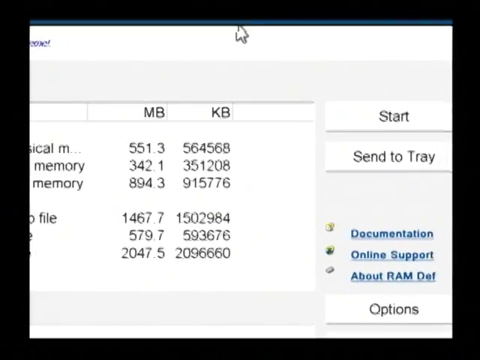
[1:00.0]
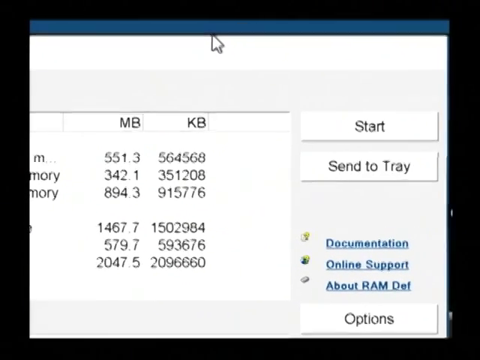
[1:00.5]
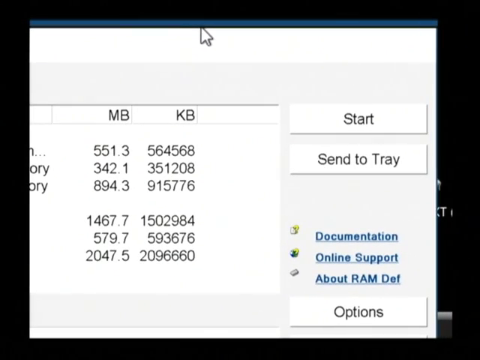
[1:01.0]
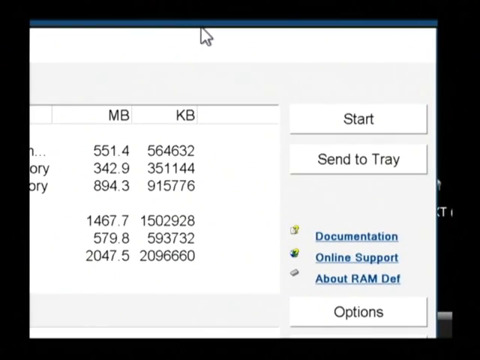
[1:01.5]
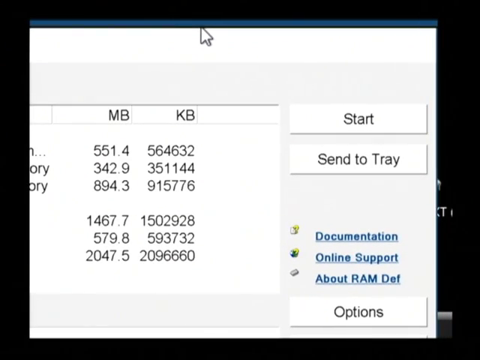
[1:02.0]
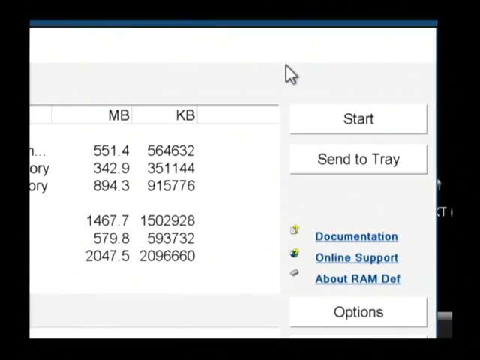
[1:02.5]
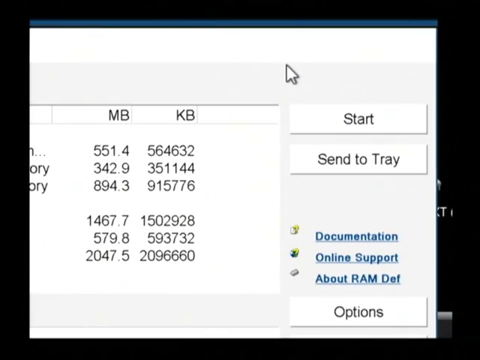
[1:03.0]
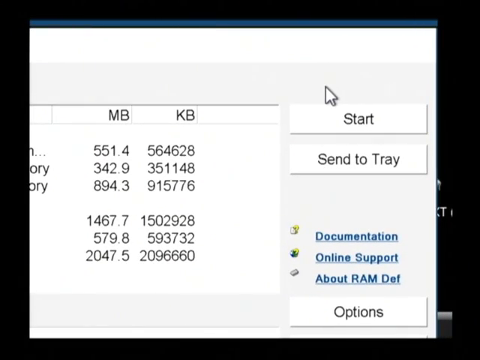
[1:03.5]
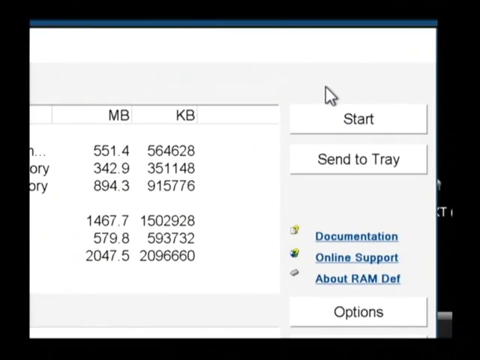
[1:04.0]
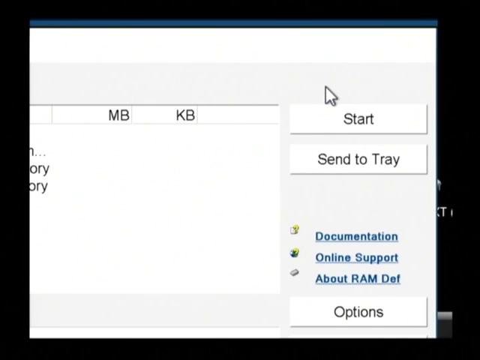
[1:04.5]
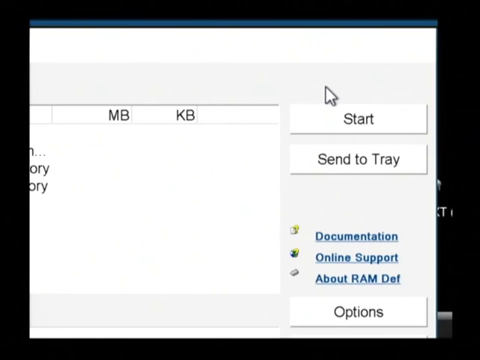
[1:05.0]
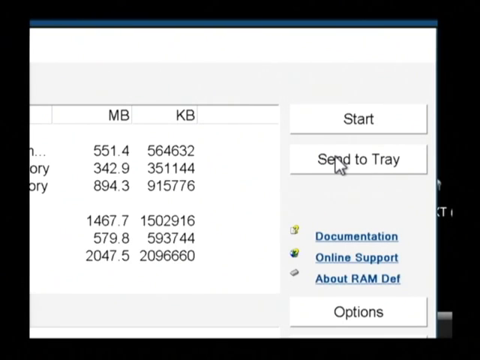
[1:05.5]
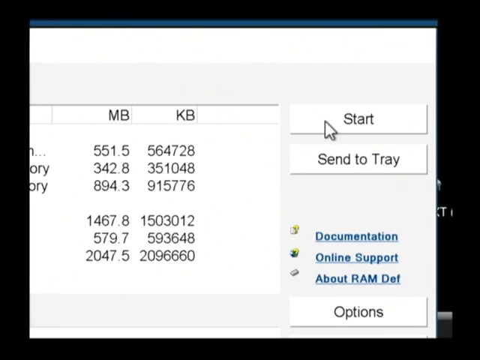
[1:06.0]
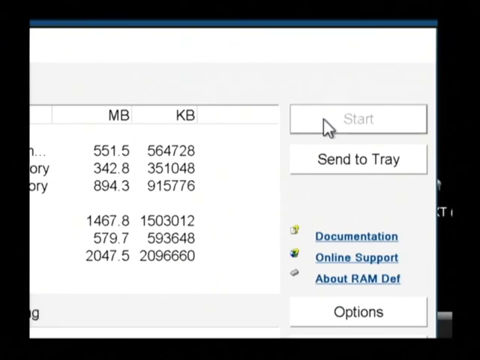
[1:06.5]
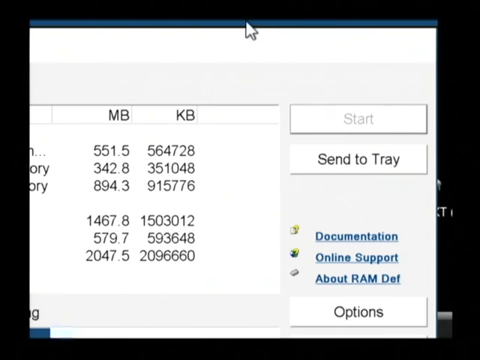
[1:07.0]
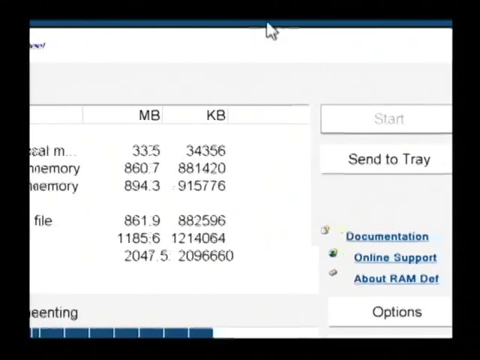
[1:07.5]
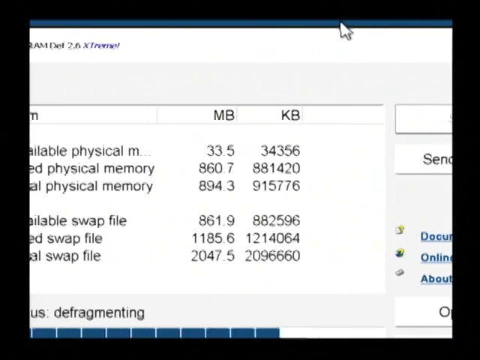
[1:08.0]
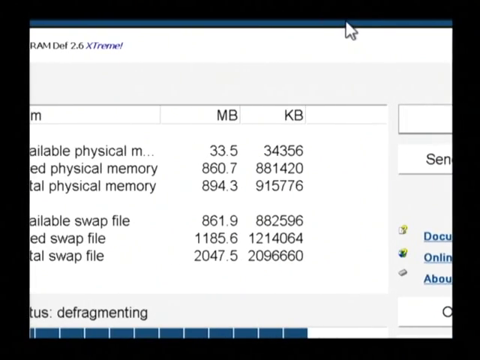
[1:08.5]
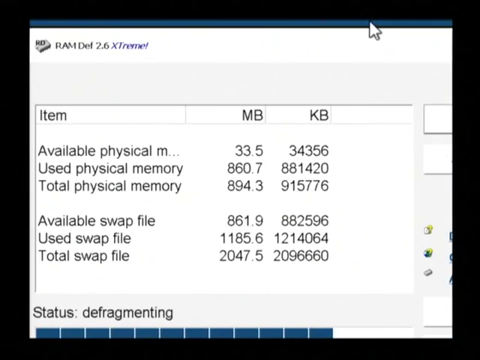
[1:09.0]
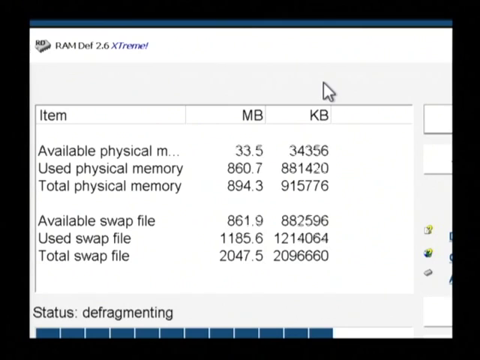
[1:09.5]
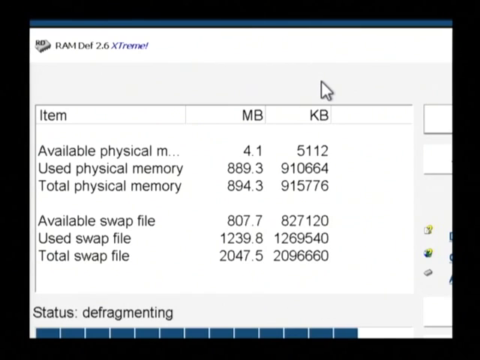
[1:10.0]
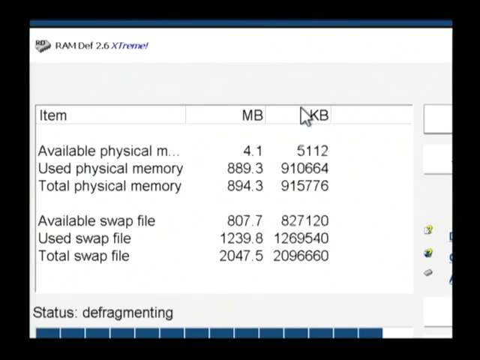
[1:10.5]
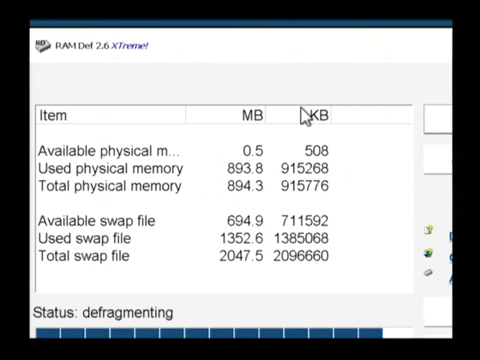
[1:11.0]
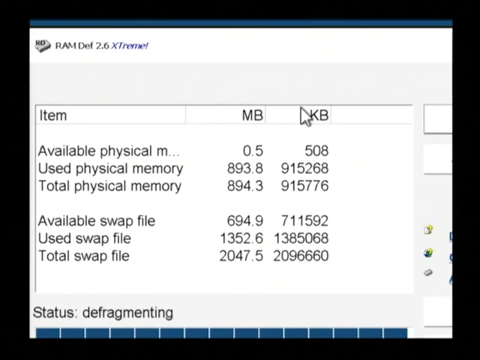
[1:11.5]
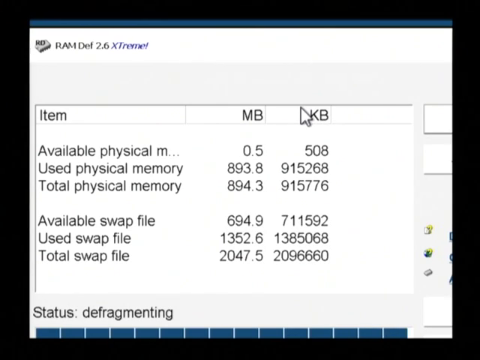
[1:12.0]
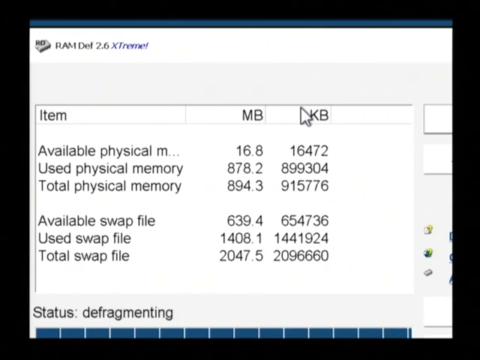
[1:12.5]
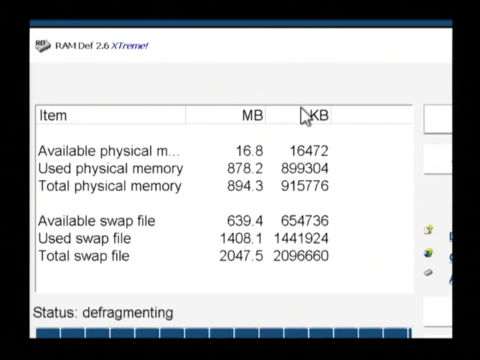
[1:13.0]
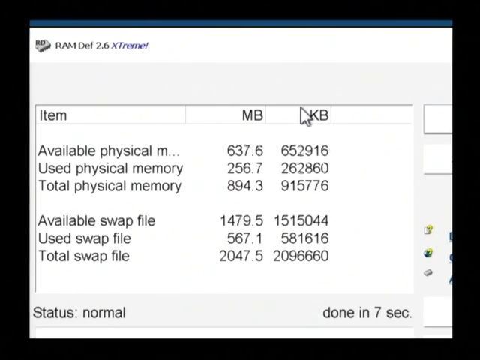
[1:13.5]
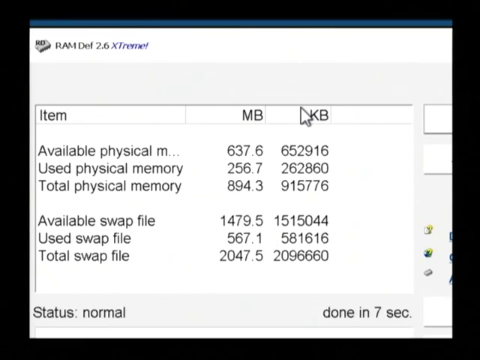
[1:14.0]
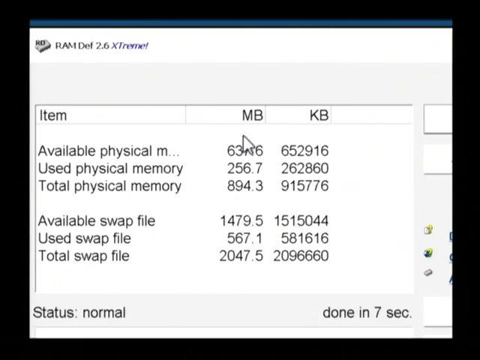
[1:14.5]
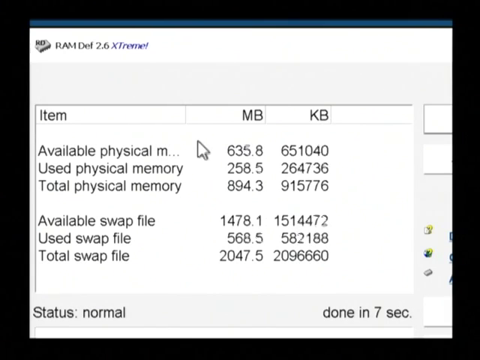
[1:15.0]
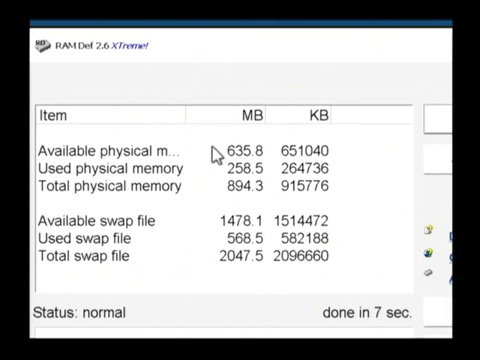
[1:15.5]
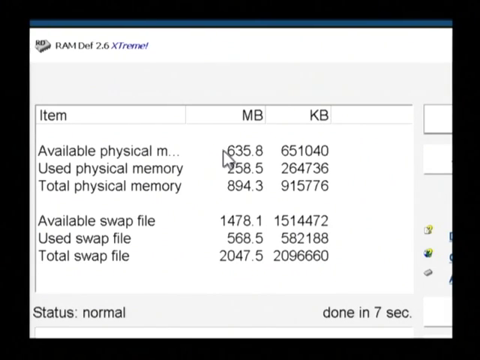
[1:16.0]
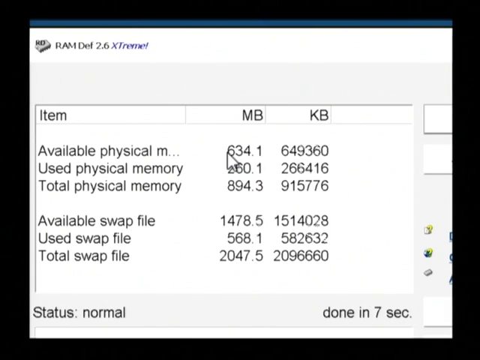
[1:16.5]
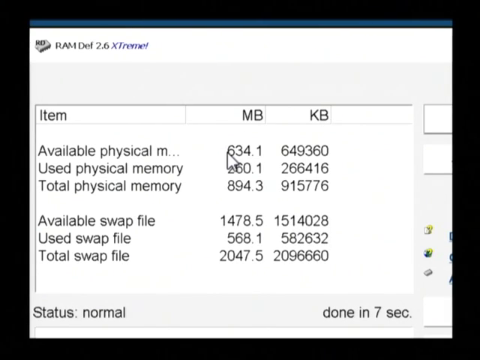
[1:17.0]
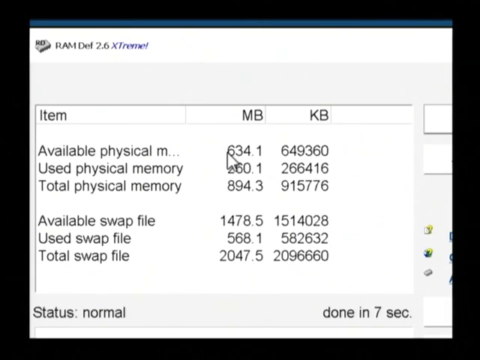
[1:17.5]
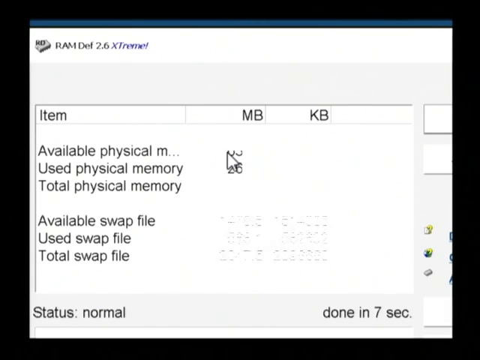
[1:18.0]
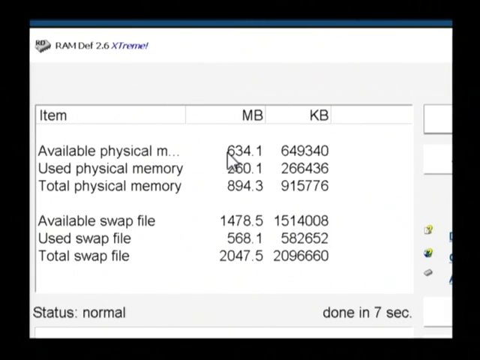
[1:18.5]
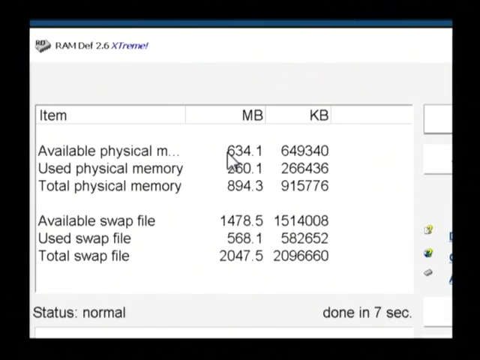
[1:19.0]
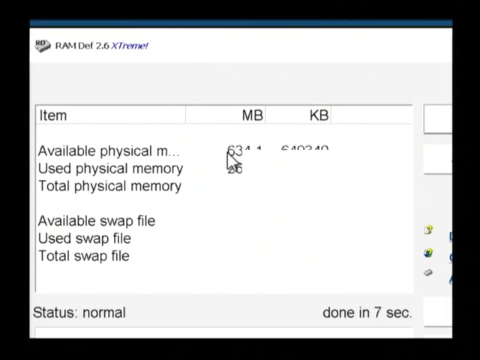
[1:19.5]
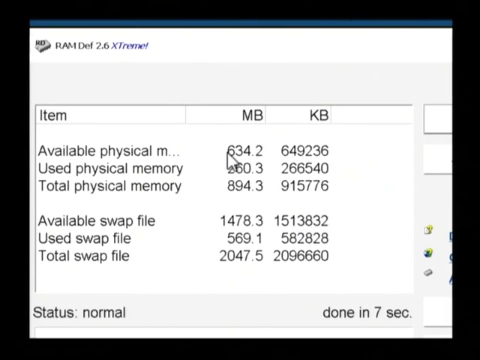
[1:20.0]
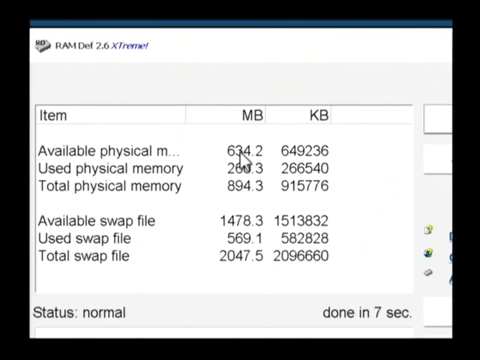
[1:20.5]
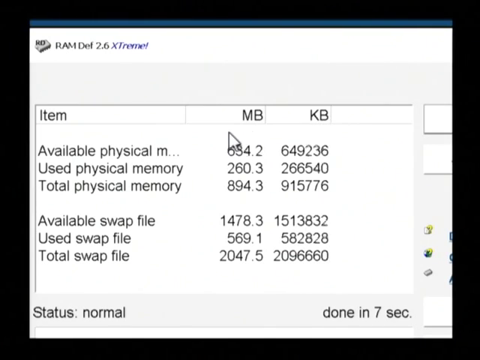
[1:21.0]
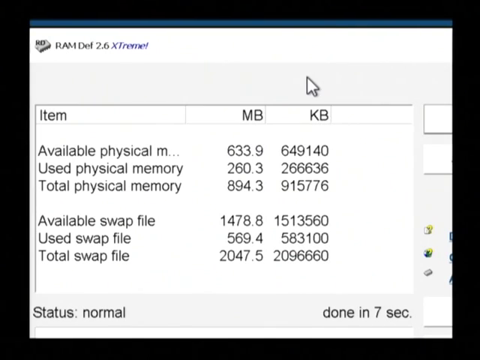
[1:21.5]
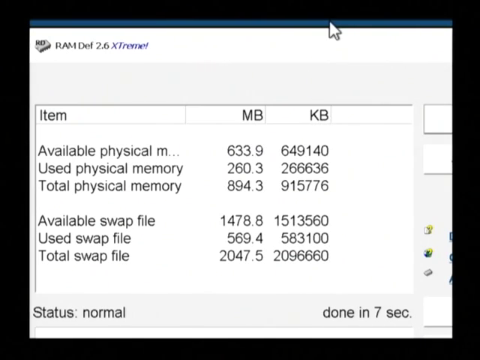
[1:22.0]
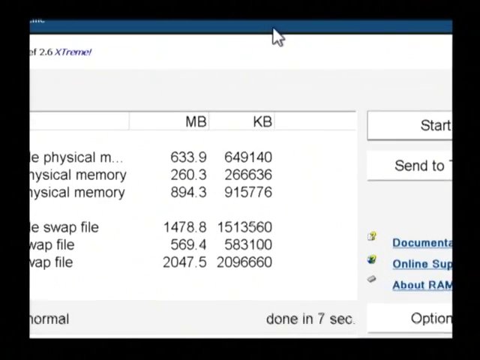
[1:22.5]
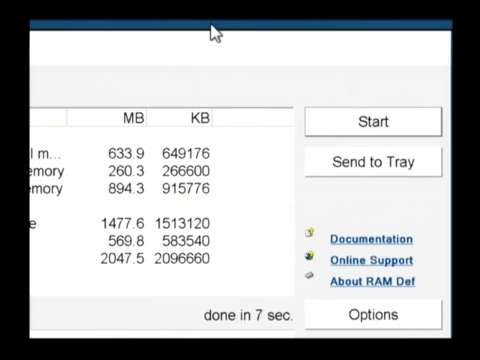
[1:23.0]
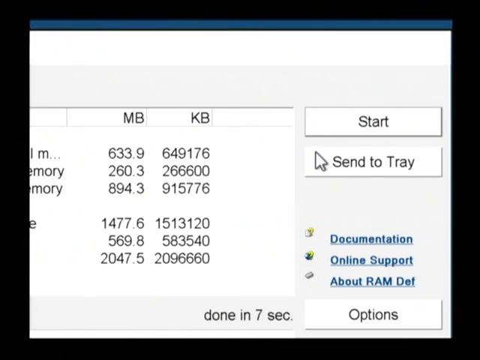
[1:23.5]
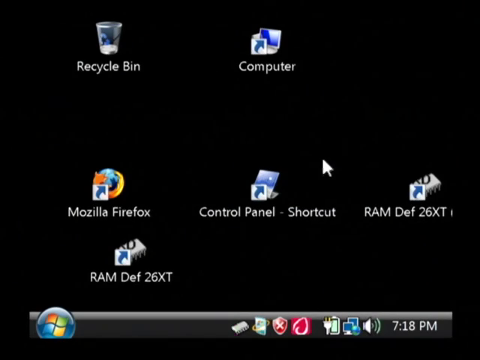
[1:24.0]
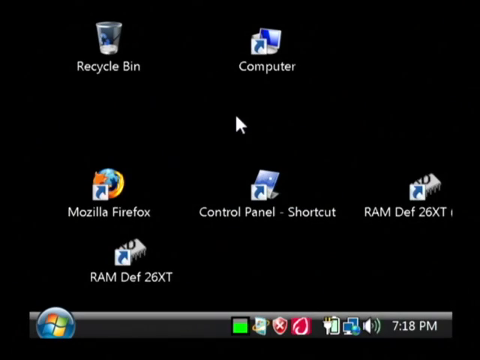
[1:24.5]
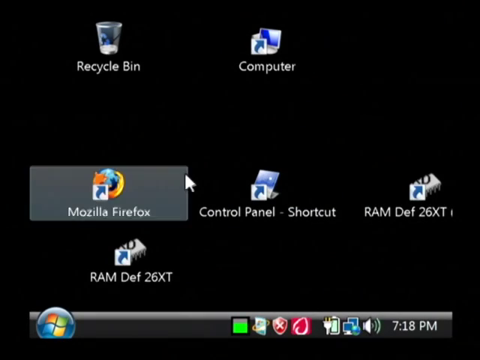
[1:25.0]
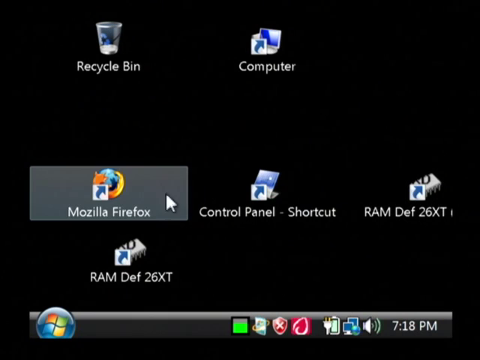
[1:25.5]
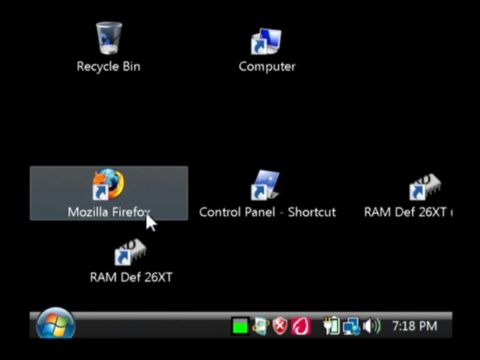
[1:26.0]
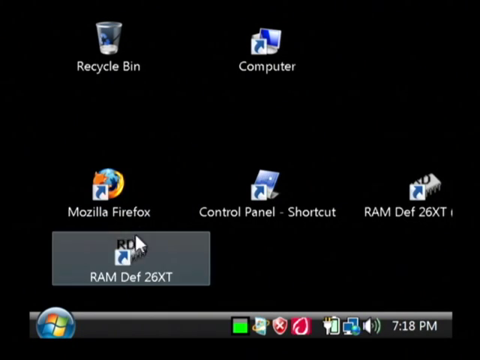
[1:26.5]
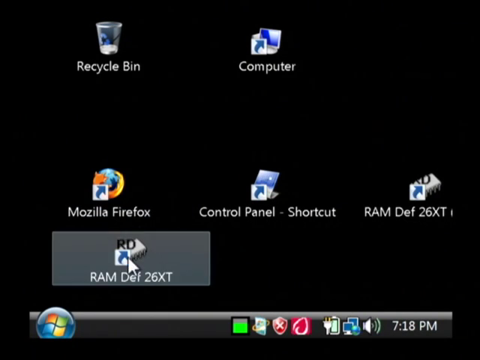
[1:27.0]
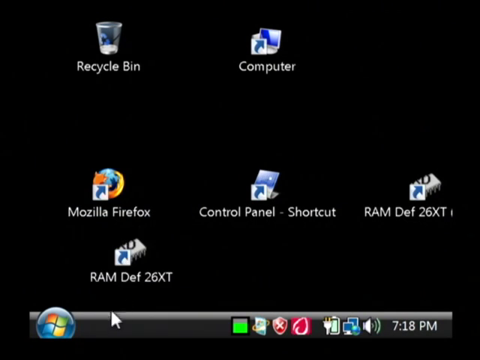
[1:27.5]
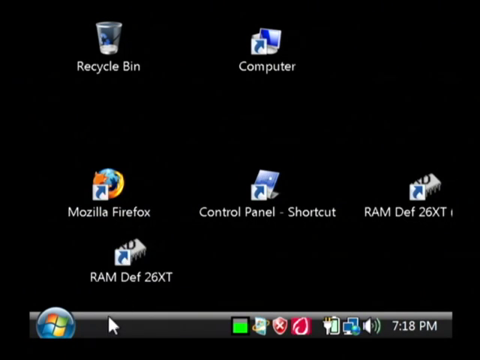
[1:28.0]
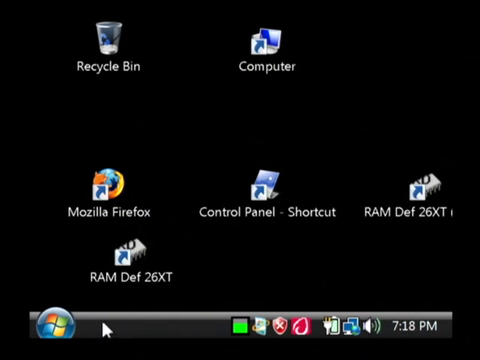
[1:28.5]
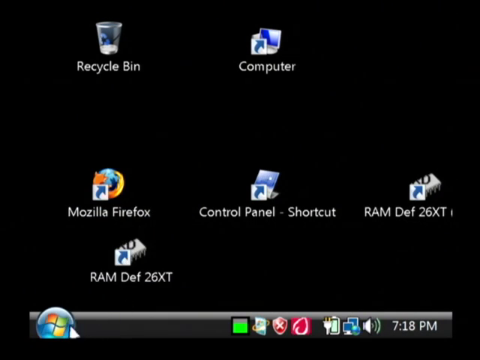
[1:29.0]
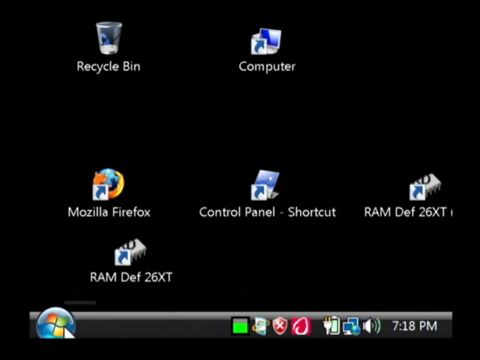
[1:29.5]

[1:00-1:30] The RAMDEF page shows the local memory and the memory allocation. The author drags the page around, revealing the side of the page with "start," "send to tray," "documentation," "online support" and "about RAMDEF," with "options" at the bottom. He moves over to the start button and clicks it; a line pops up at the bottom showing defrag, the status "defragmenting" and a completion mark. The available physical memory then goes way up and the used physical memory goes down. The status drops to normal, finishing in seven seconds. The author clicks send to tray and moves down to his start button.